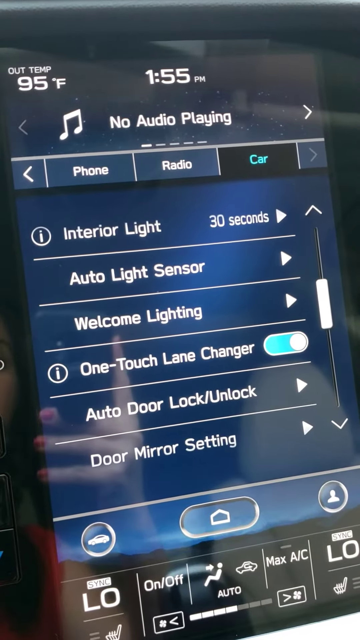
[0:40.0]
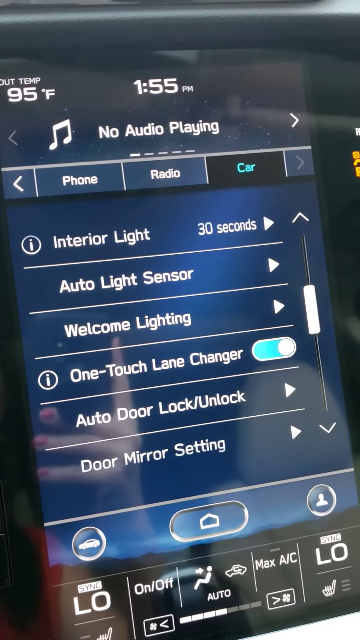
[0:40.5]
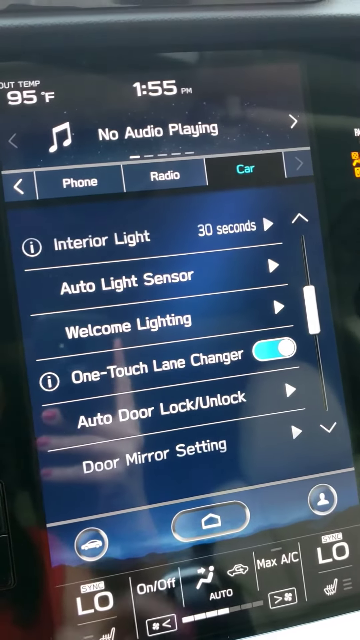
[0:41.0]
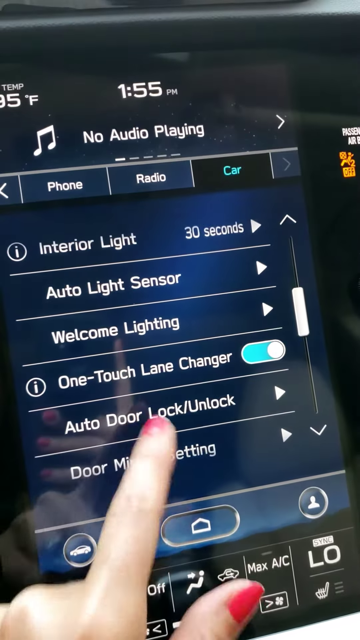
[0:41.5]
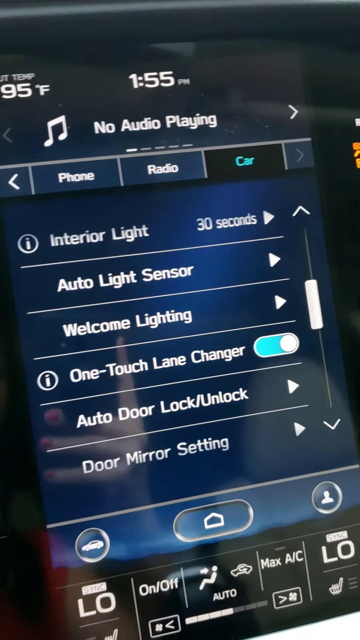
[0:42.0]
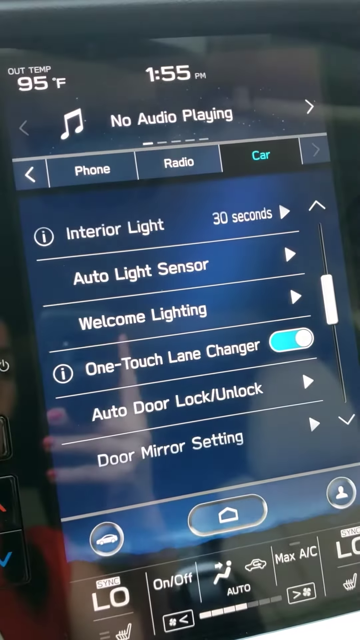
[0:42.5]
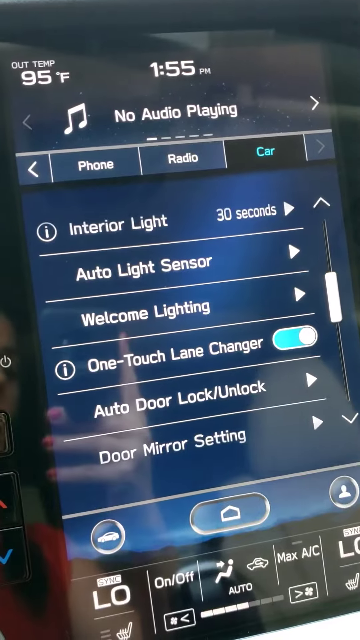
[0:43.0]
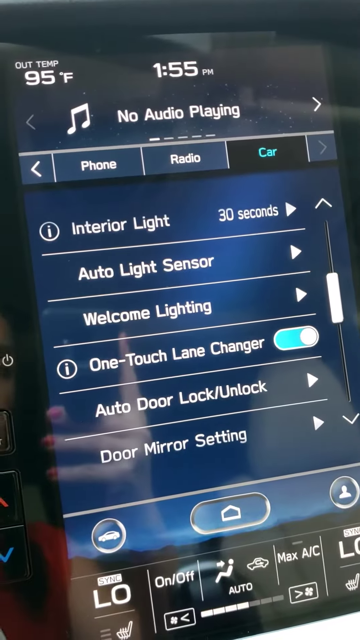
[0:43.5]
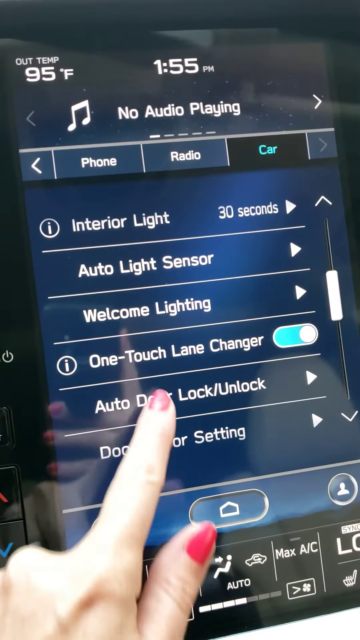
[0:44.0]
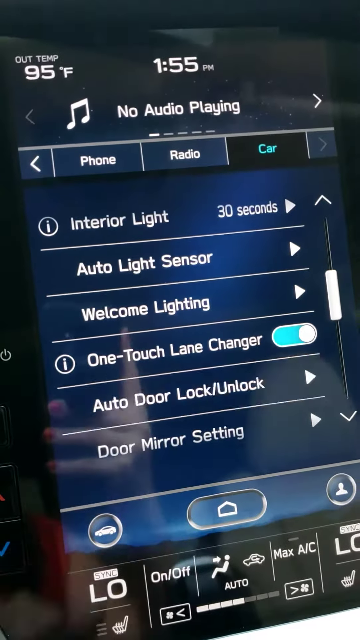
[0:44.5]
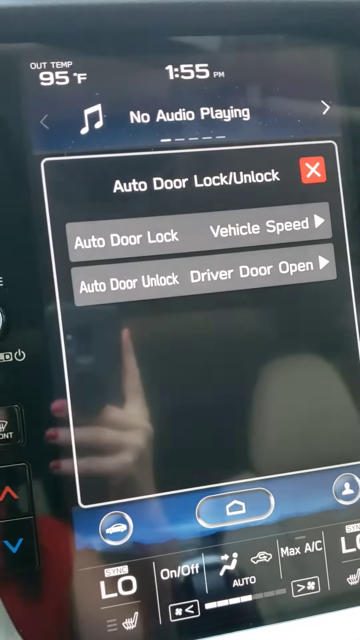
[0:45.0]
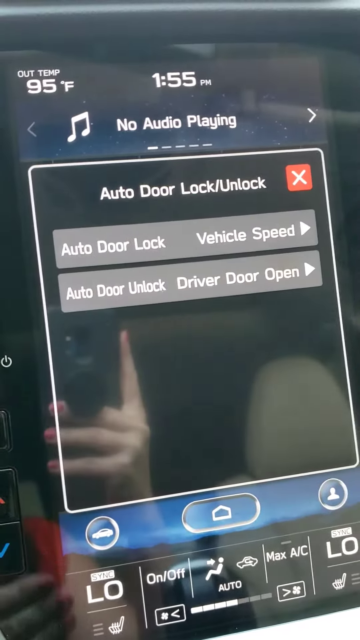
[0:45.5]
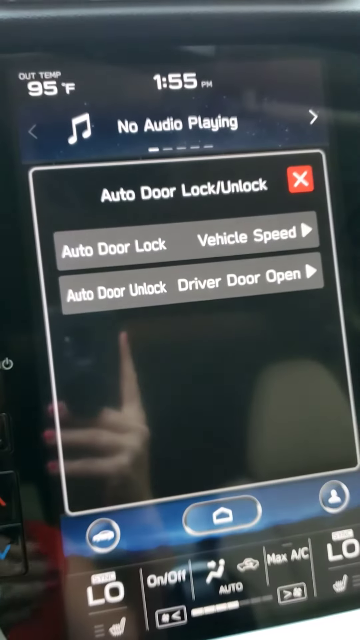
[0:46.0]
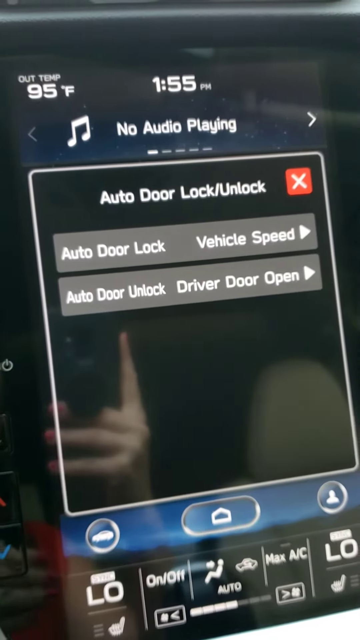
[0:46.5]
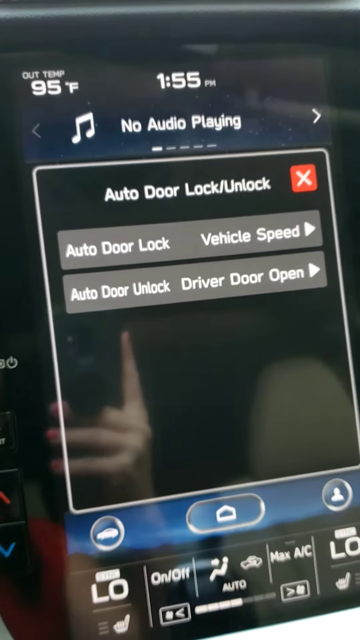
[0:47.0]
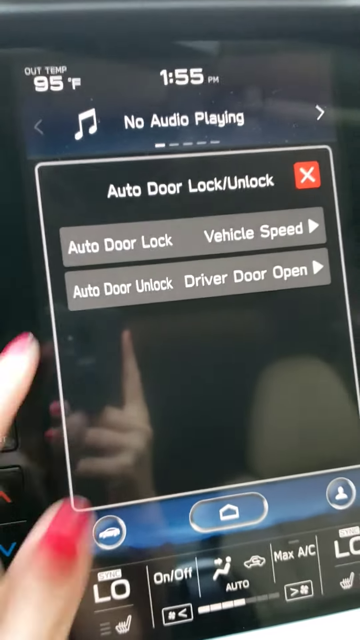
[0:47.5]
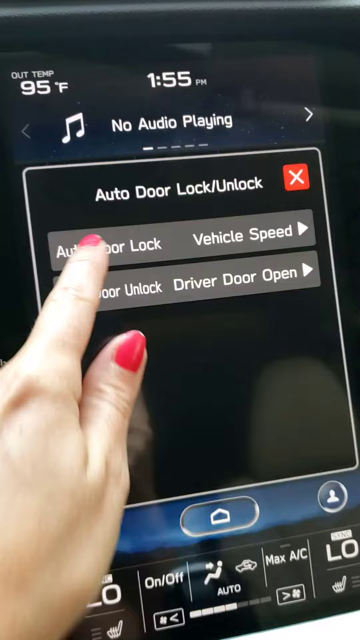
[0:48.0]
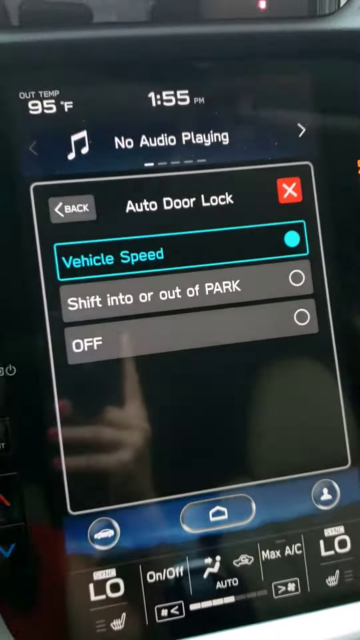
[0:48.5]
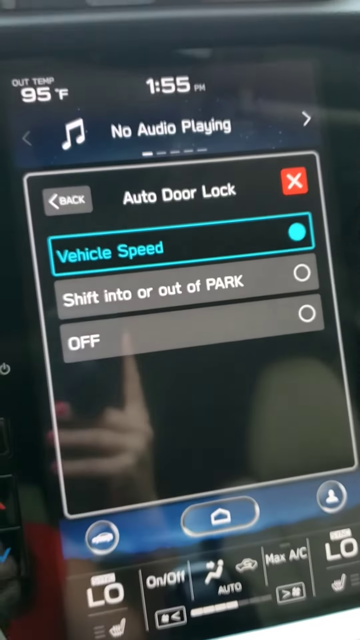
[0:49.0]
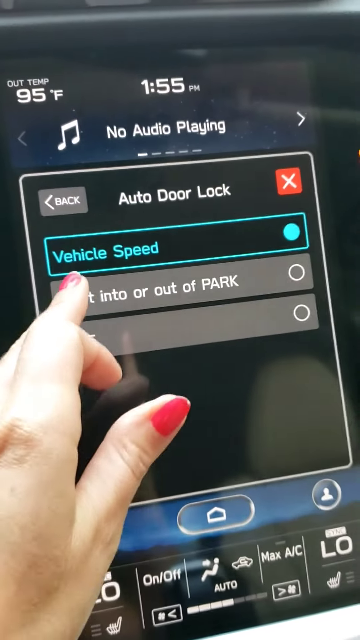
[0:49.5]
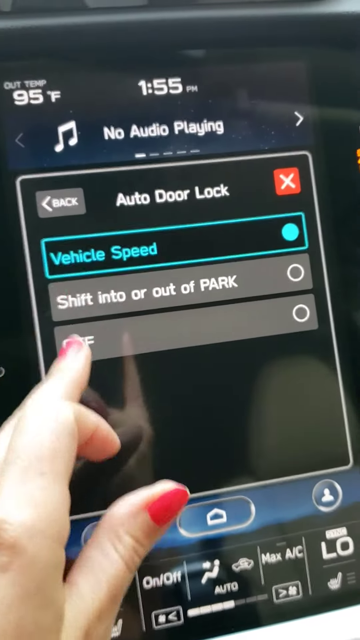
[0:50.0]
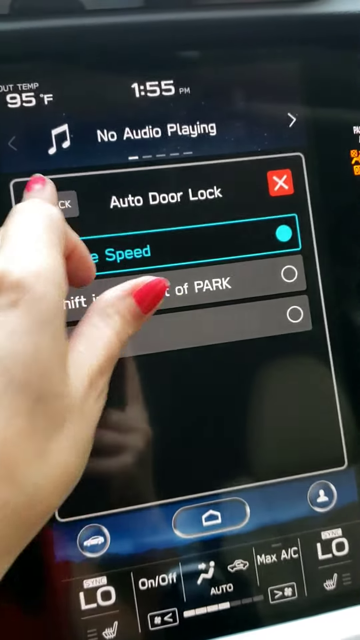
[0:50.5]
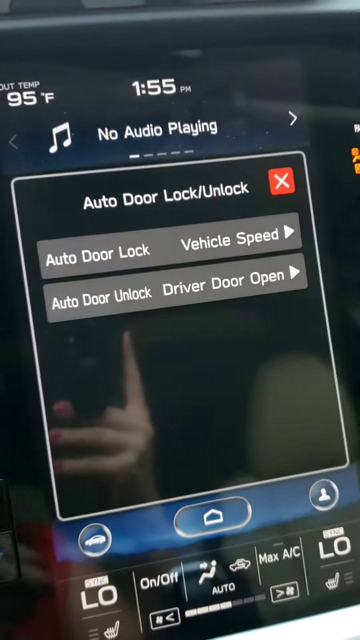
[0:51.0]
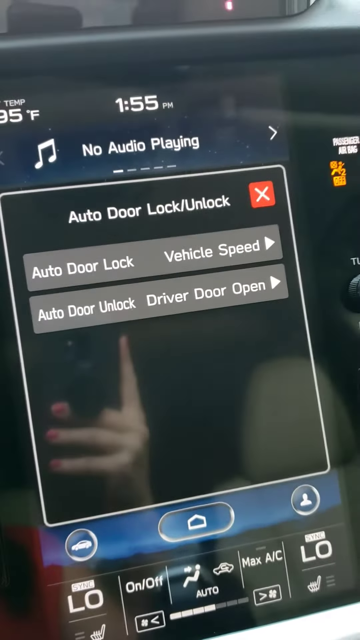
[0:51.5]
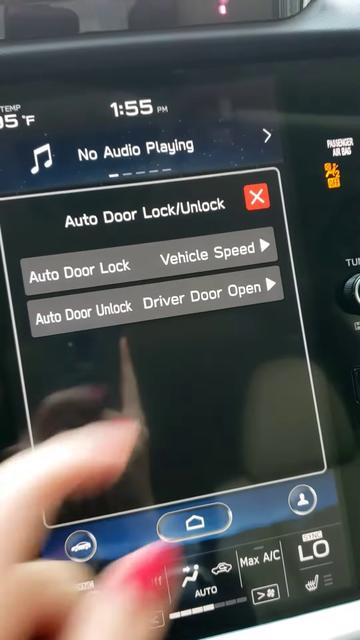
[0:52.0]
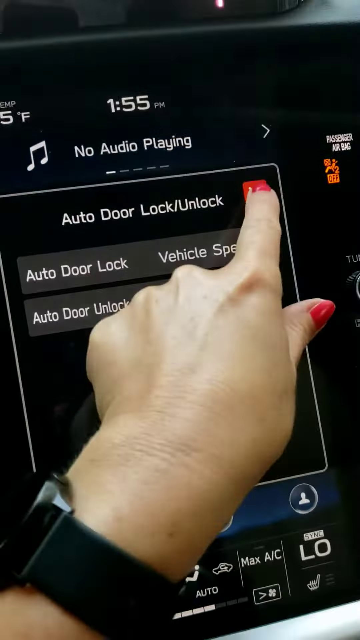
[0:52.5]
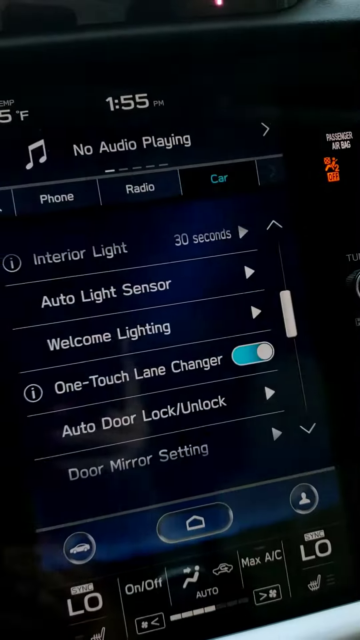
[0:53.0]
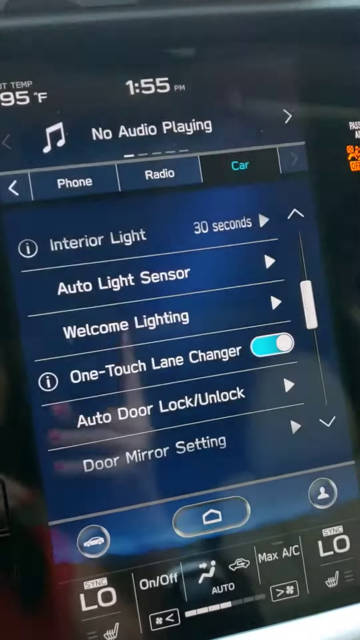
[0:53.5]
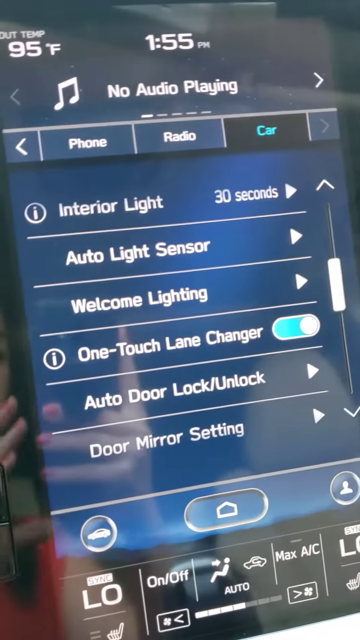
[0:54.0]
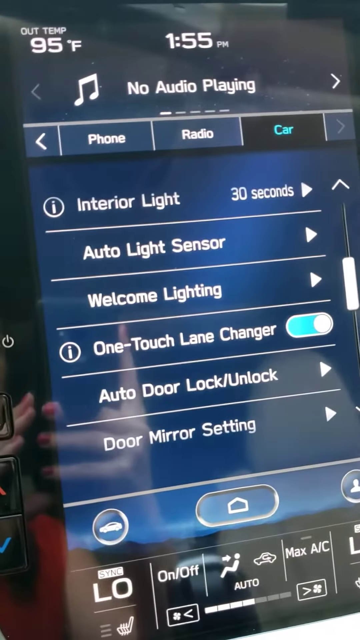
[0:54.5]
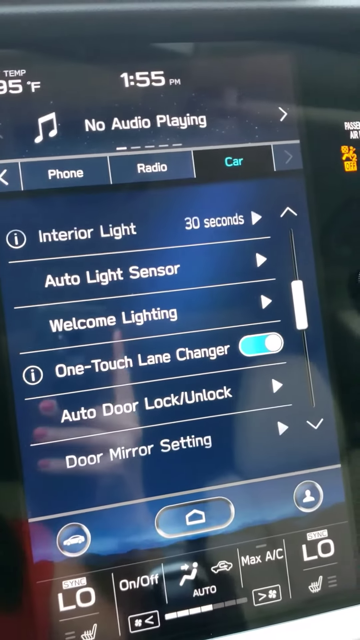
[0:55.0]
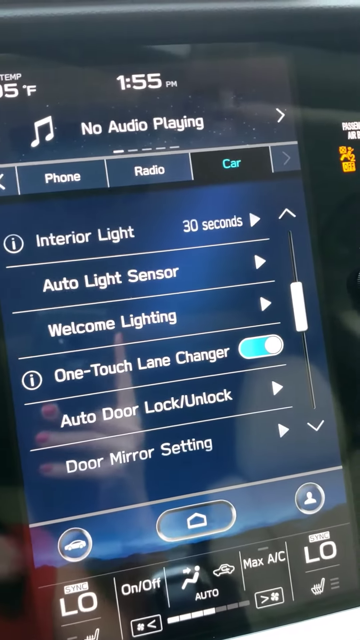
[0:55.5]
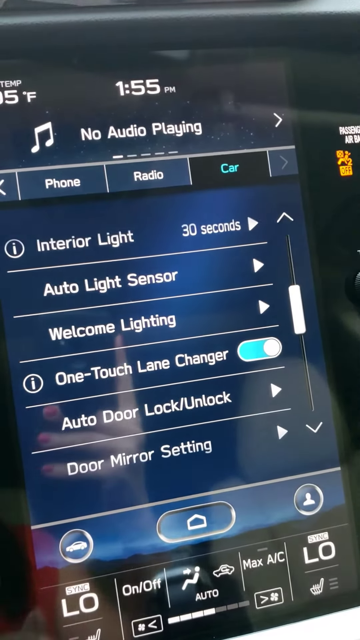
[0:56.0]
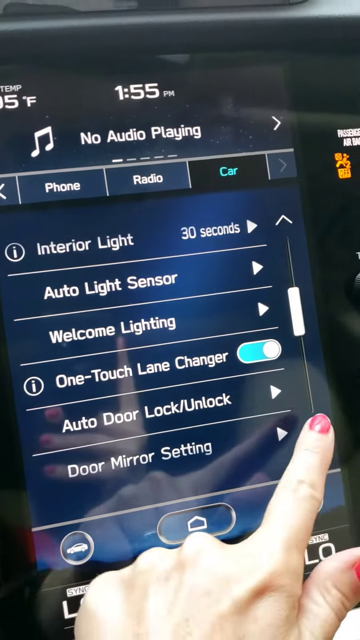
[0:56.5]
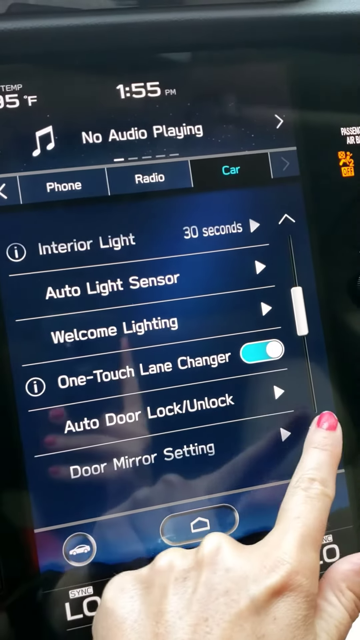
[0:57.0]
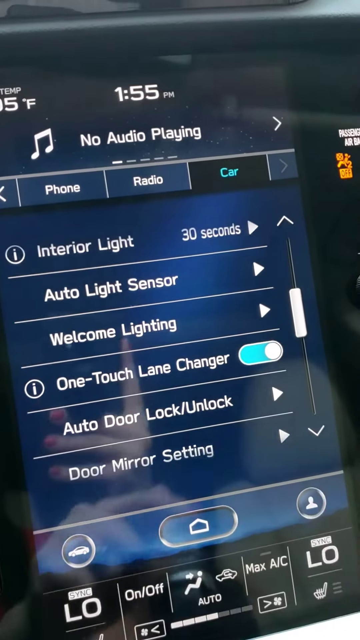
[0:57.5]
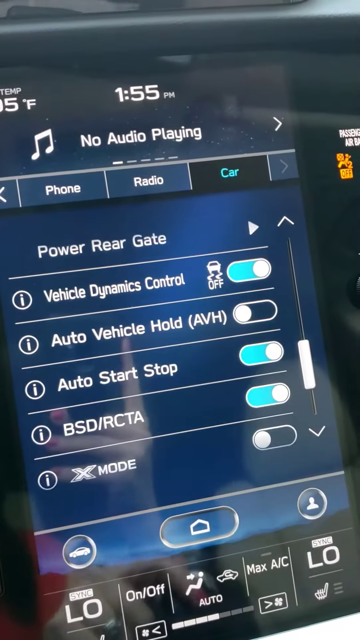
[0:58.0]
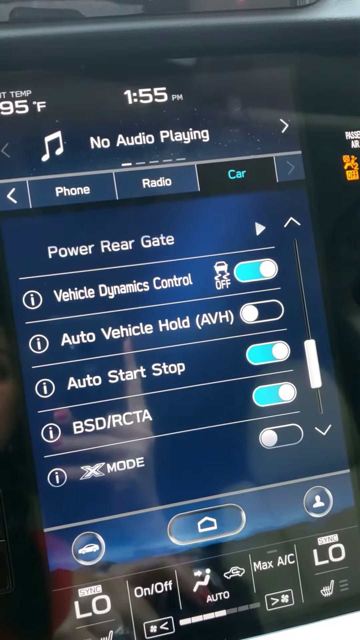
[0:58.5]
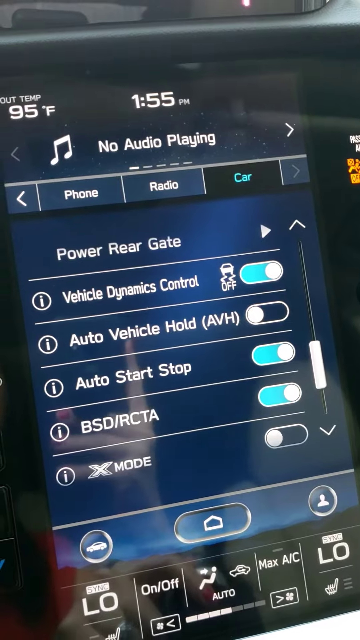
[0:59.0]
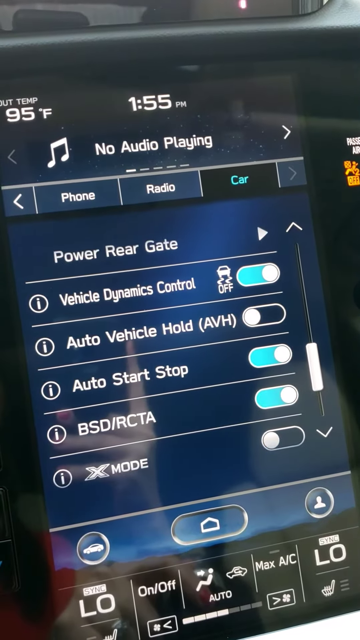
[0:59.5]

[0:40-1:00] A woman with pink nail polish pushes "auto door lock" on a screen in her car, then pushes it again. The screen reads "skip intro," and she X's out of it. "One touch lane changer" and "vehicle dynamics" are showing. She makes a very quick selection, and it is hard to see what she pushed. Above, the screen reads "no audio playing" and offers the choices "phone," "radio," and "car," with car illuminated in blue. She holds something in her right hand while touching the screen with her left, and at one point she touches the thing in her hand. There appear to be two separate screens: one in her hand and the other part of the dashboard.